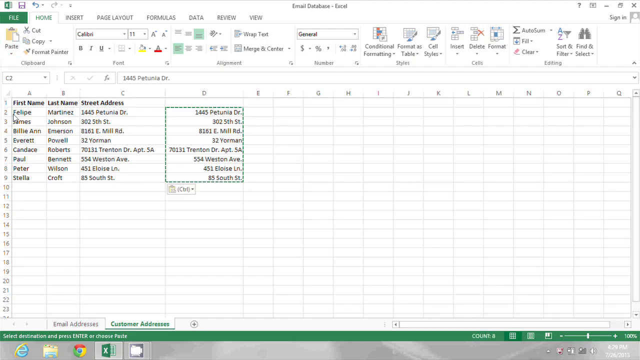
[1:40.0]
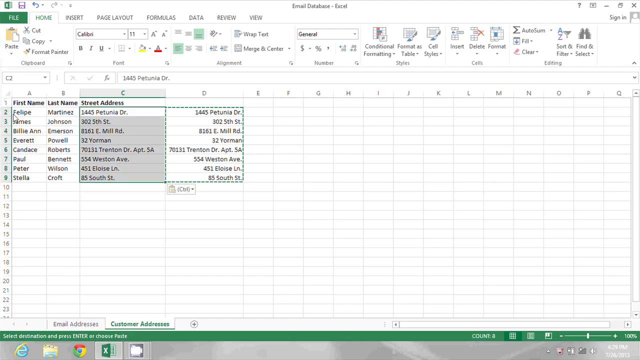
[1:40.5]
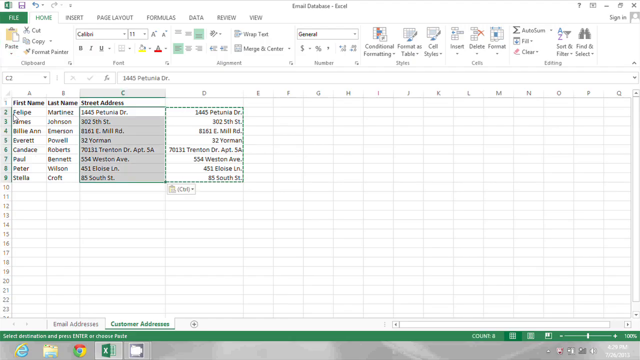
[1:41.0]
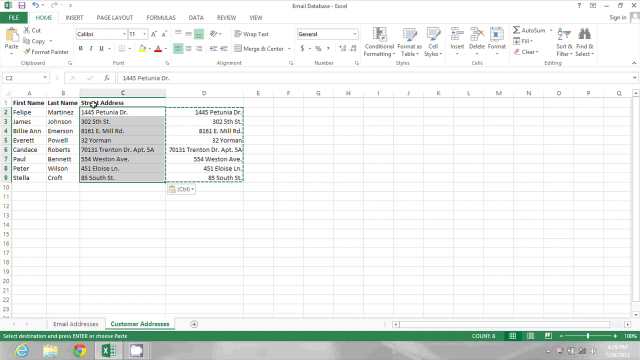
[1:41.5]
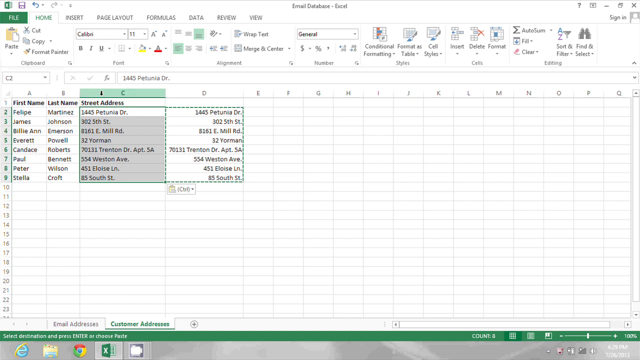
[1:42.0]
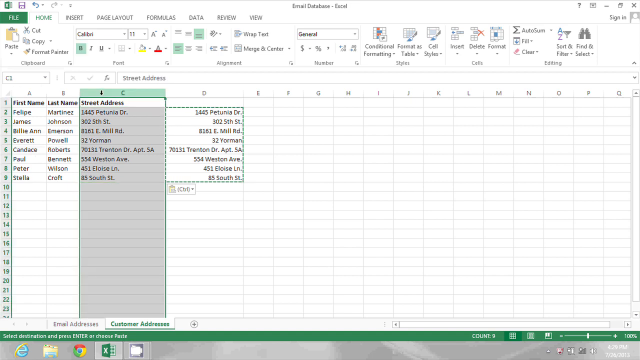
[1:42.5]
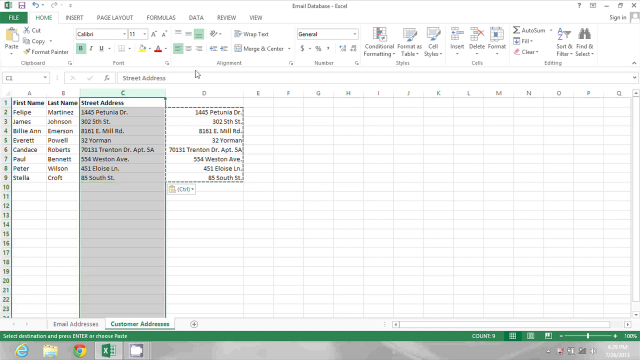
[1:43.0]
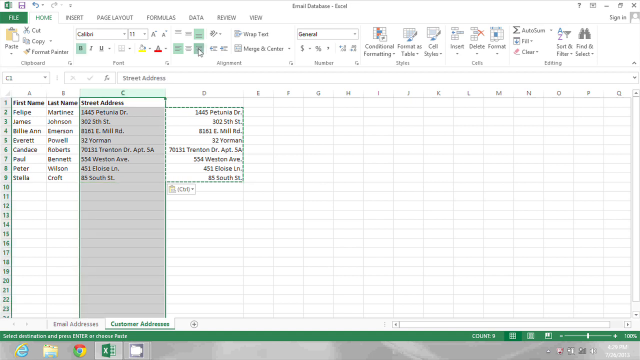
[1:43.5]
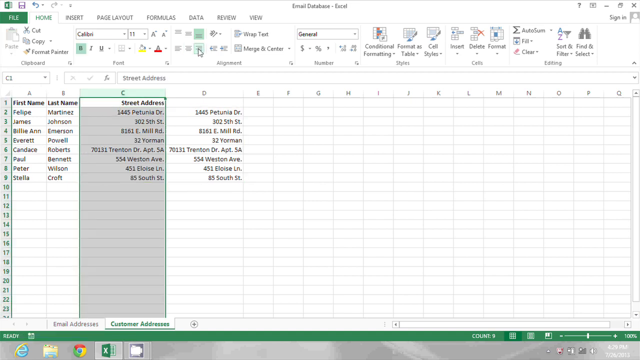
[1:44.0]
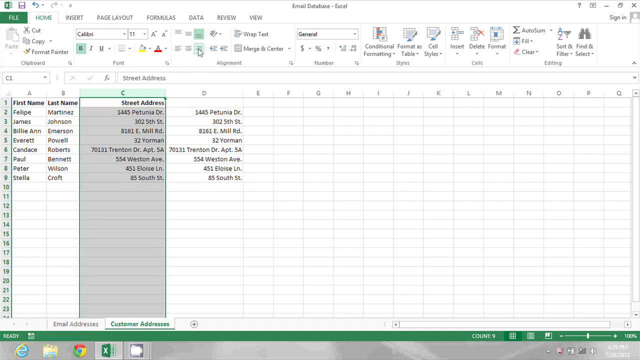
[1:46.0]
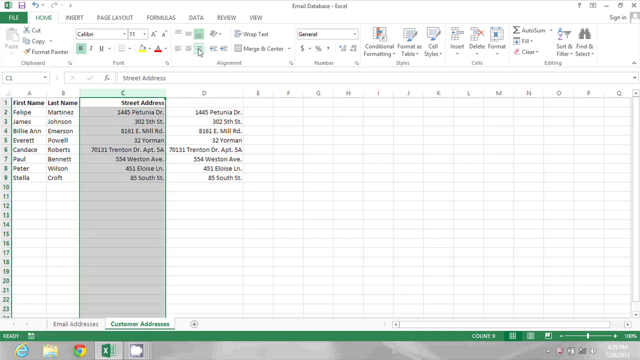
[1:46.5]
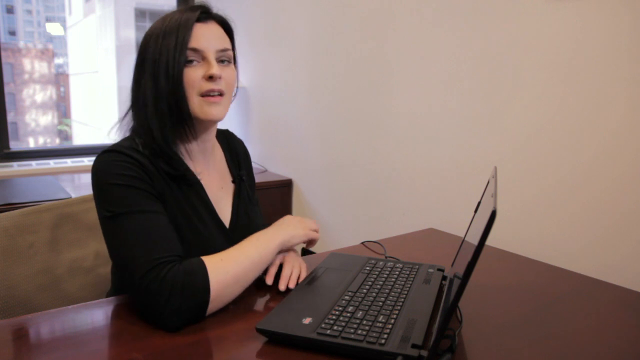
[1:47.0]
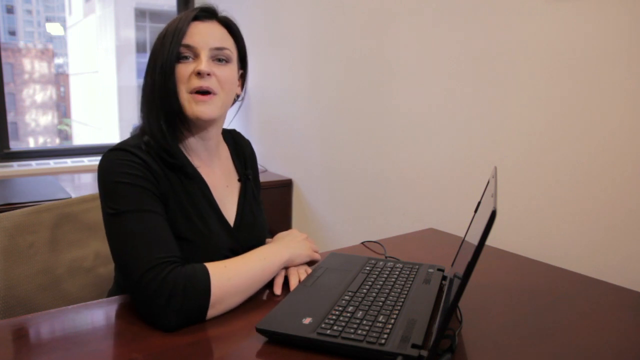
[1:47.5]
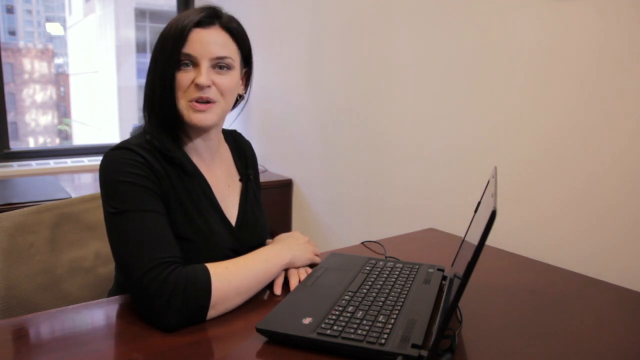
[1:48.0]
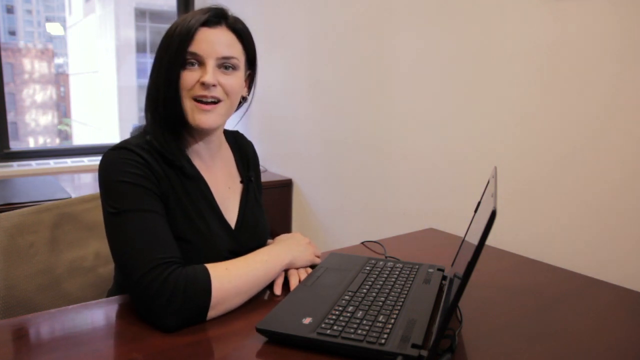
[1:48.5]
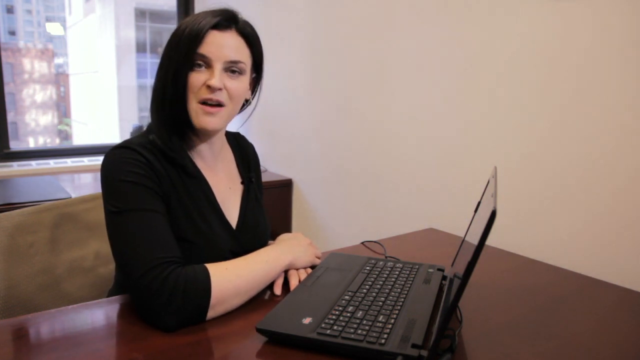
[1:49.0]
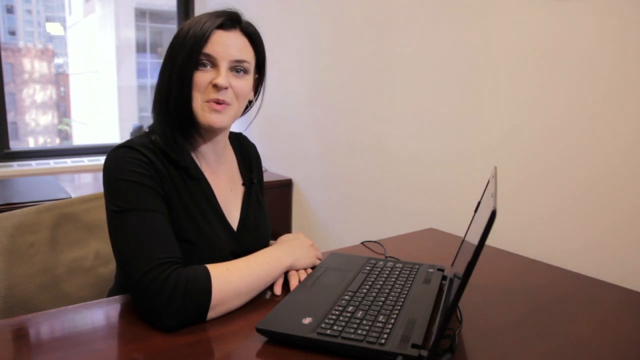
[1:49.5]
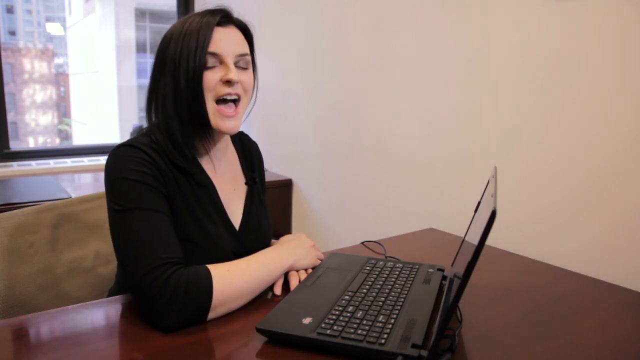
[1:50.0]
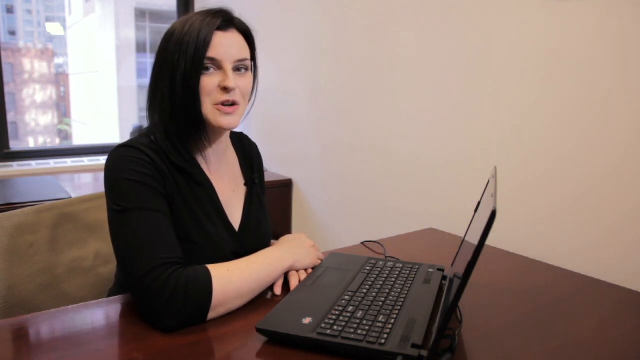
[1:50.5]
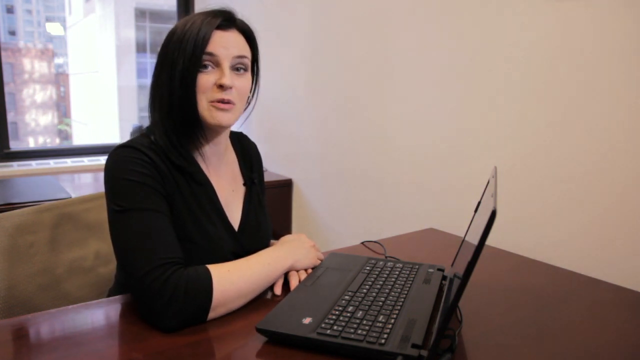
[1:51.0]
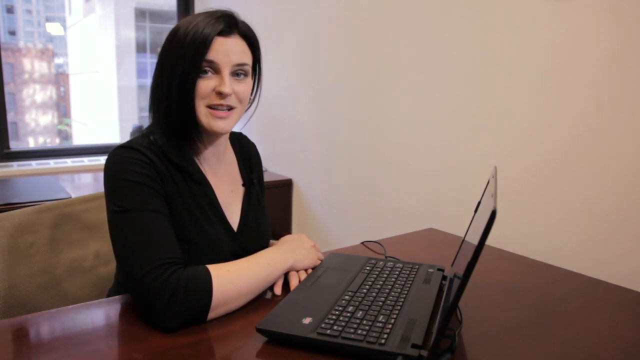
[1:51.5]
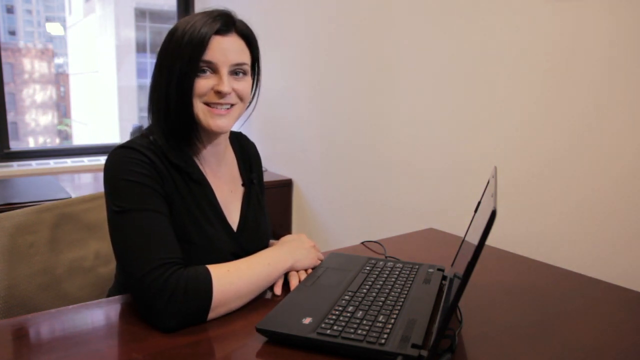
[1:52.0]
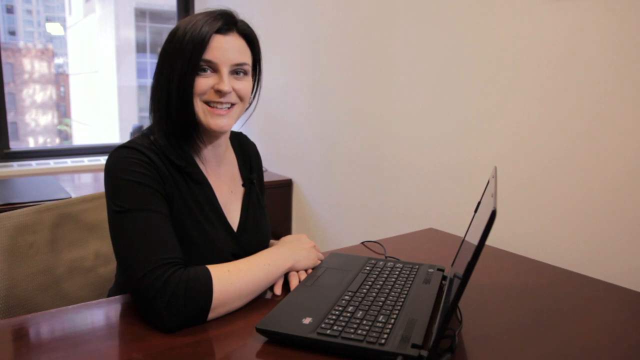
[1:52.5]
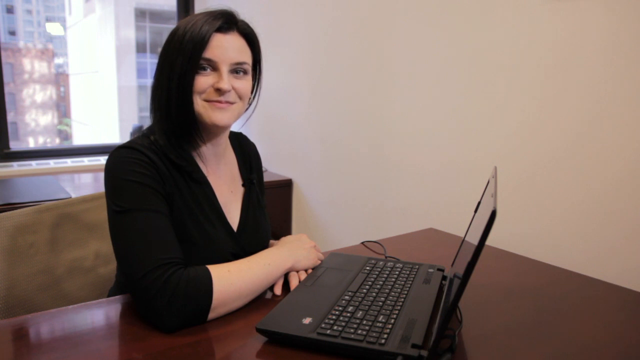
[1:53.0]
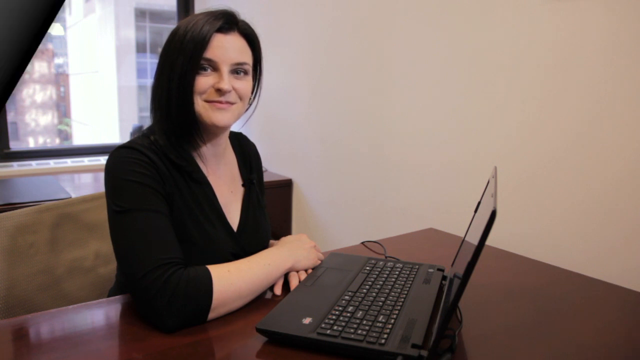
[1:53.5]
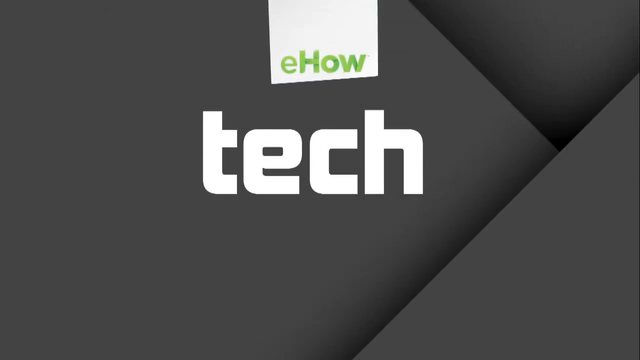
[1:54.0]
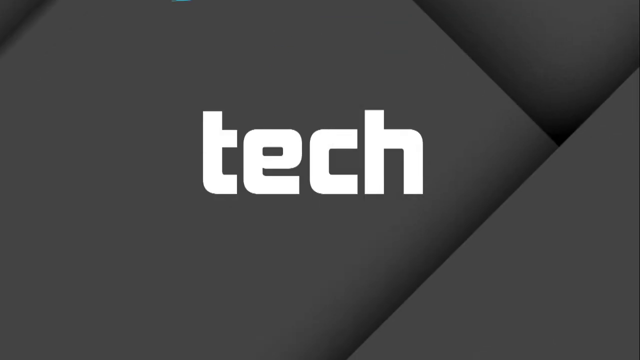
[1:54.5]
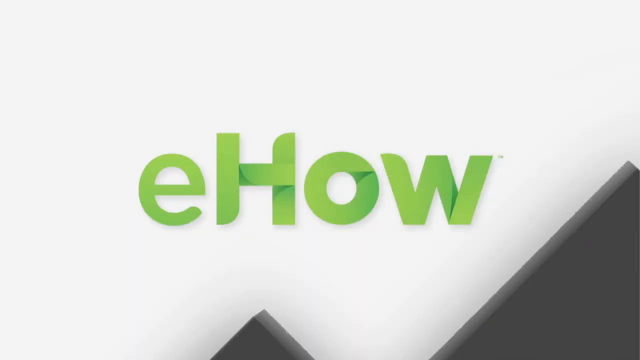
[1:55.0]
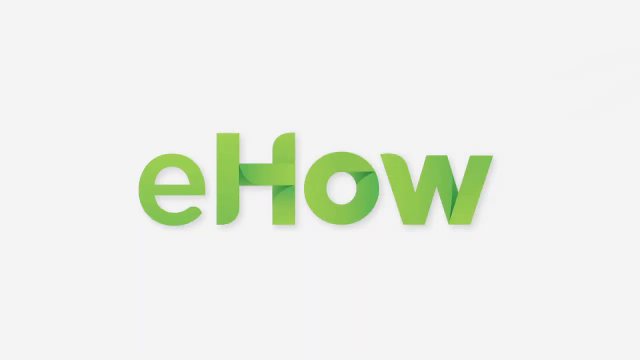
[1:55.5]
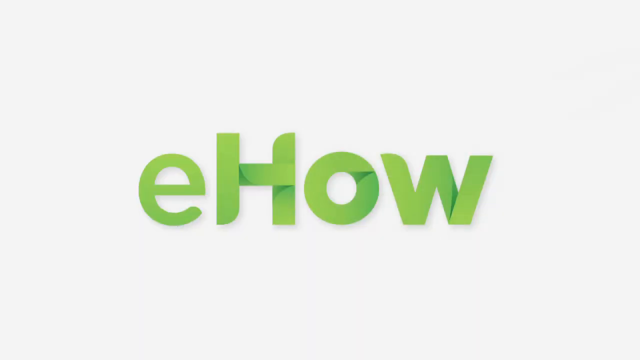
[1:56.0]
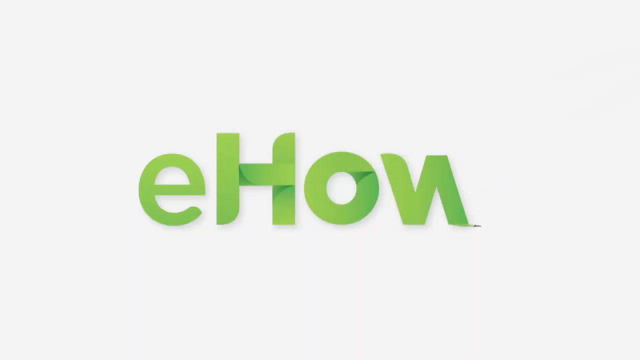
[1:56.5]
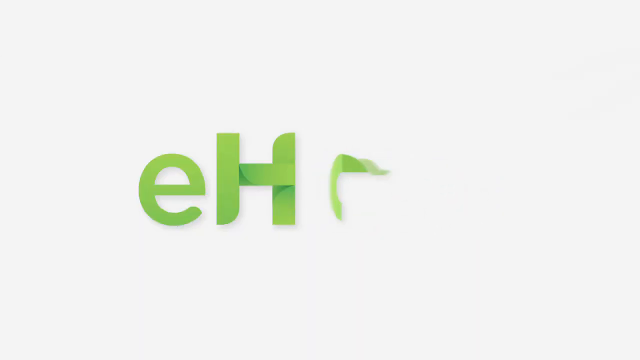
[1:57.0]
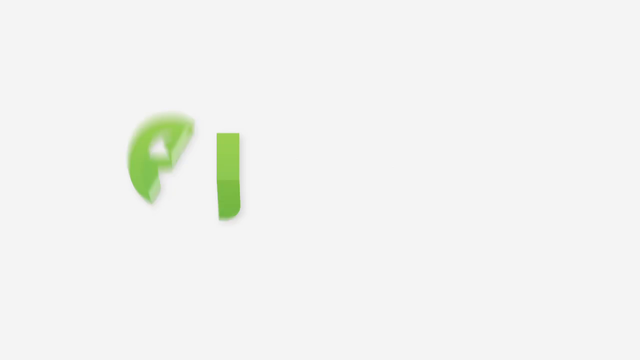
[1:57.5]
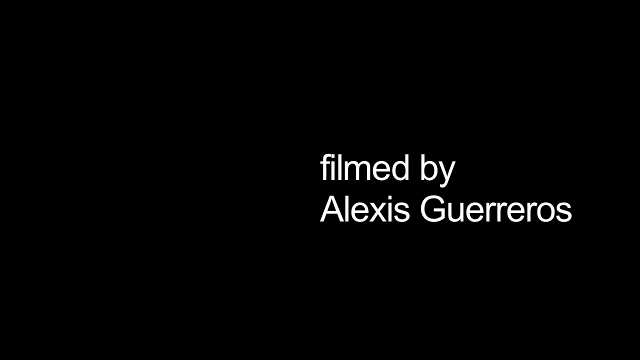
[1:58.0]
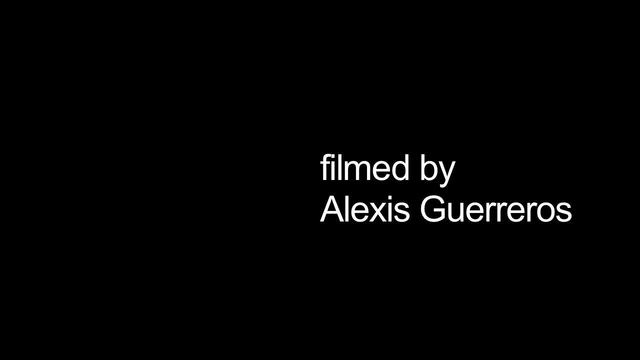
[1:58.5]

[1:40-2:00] The scene opens with the column D cells completely highlighted, then turns to the instructor facing the camera and talking in the white-walled office, in front of her laptop. It then cuts to the eHow logo in green lettering on a white background, which swings over the word "tech" in black and white lettering.